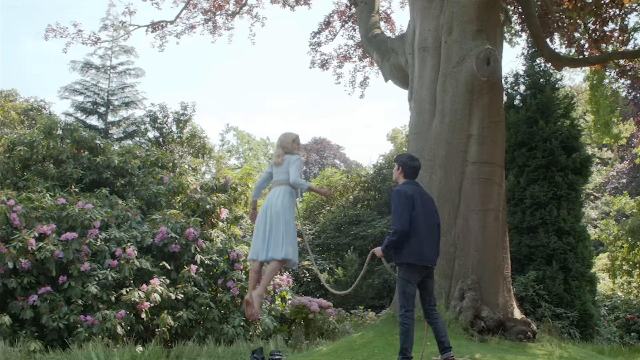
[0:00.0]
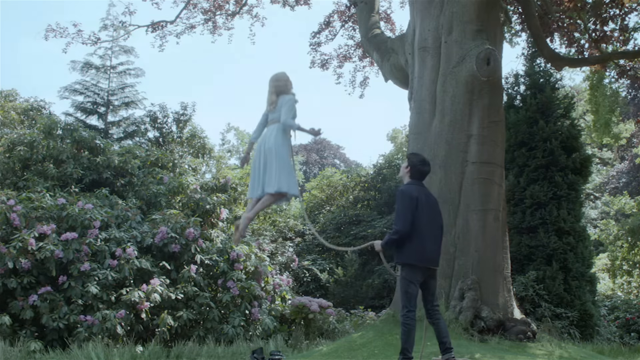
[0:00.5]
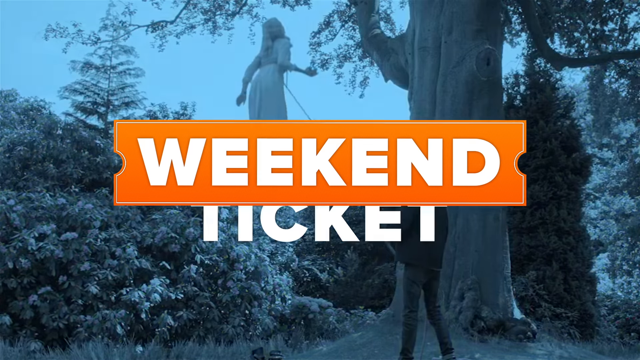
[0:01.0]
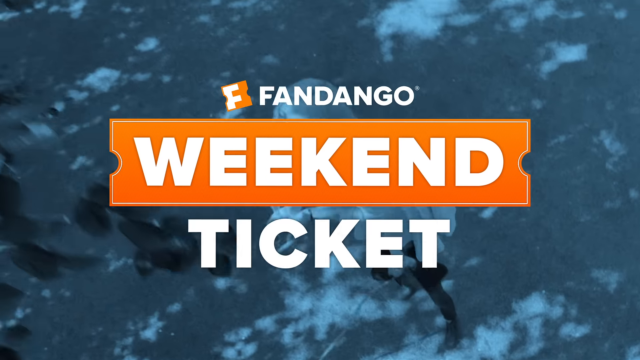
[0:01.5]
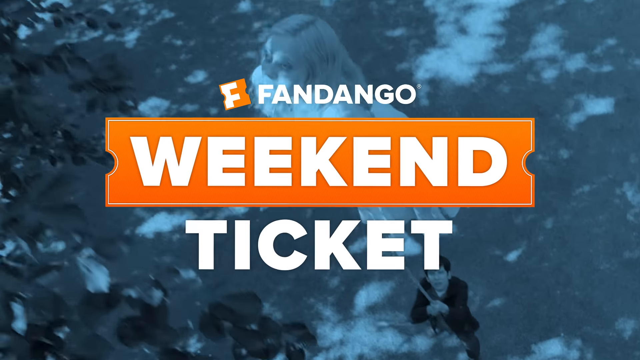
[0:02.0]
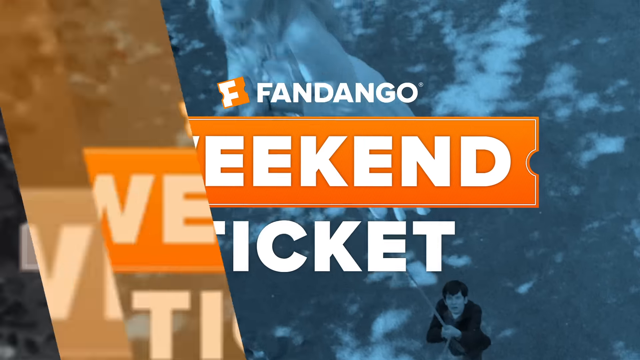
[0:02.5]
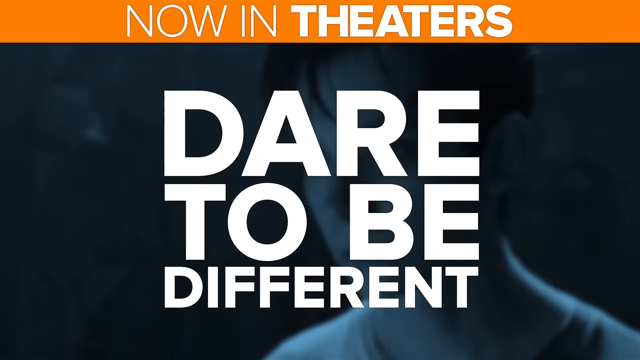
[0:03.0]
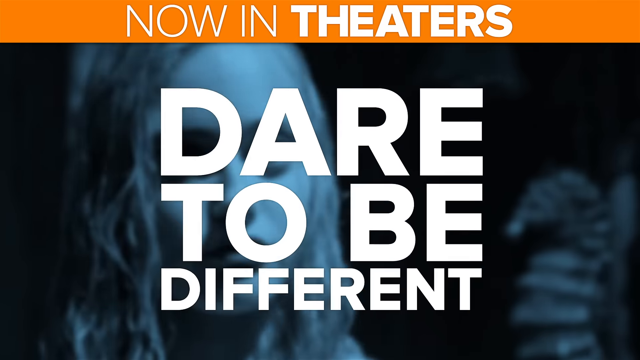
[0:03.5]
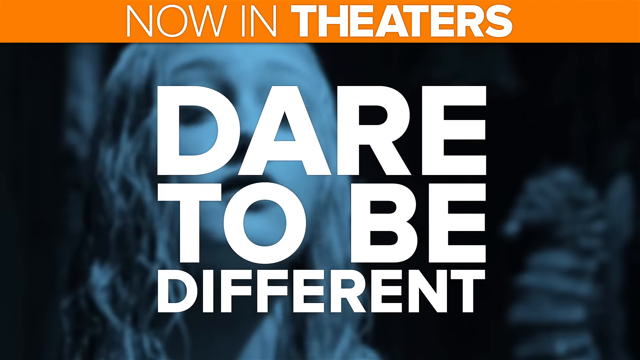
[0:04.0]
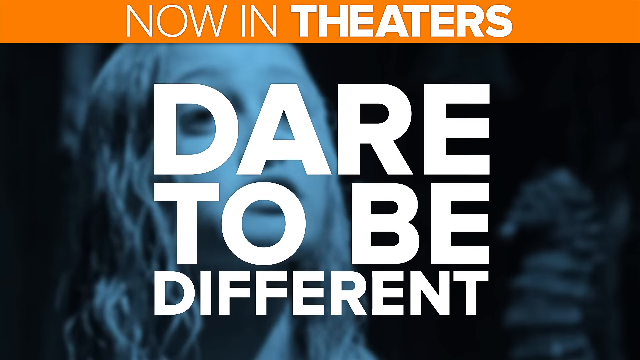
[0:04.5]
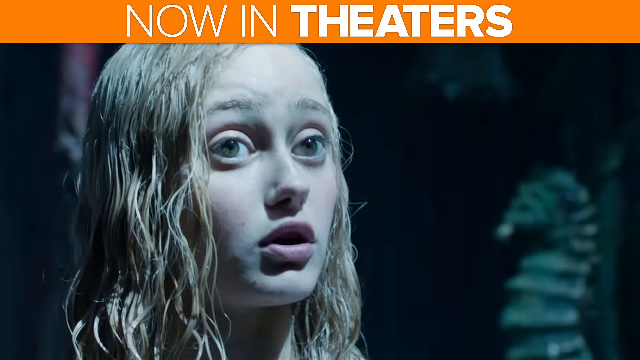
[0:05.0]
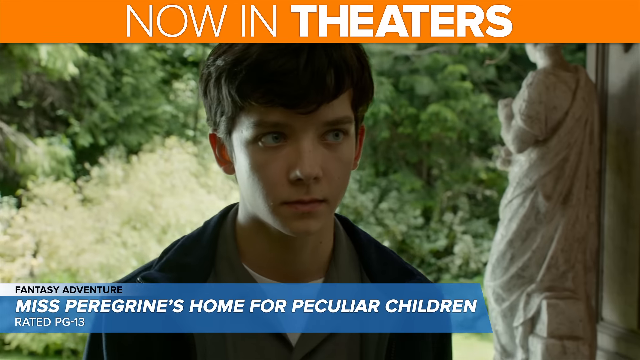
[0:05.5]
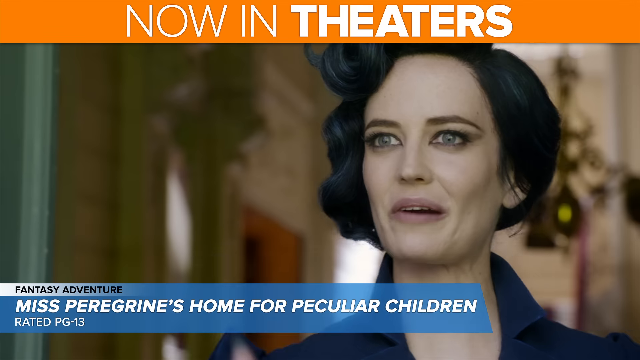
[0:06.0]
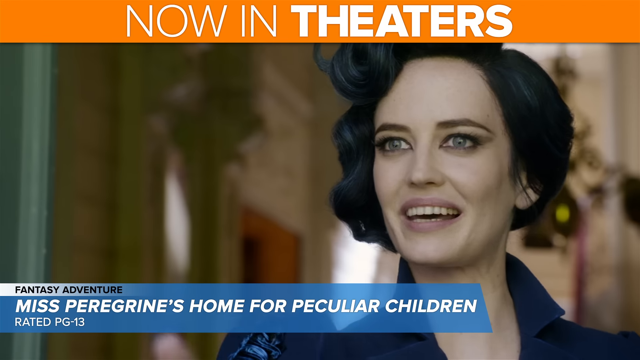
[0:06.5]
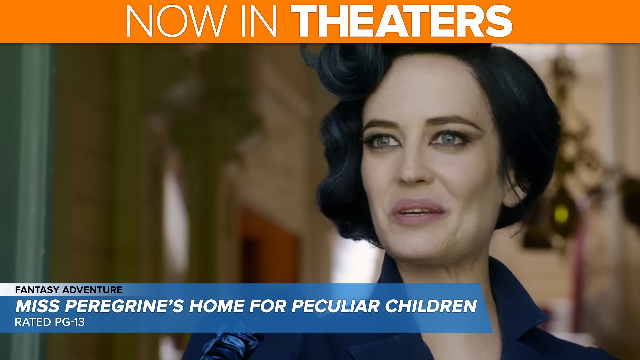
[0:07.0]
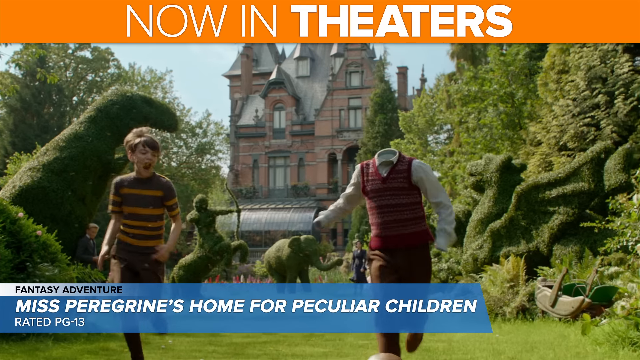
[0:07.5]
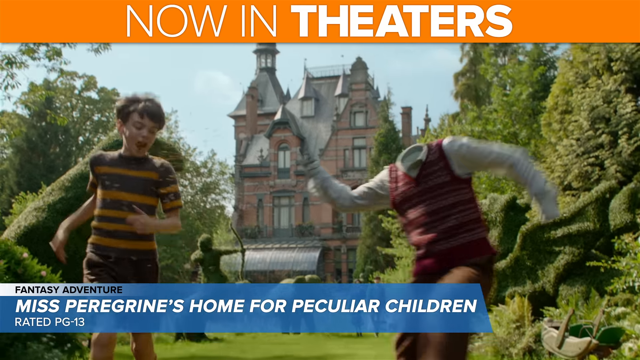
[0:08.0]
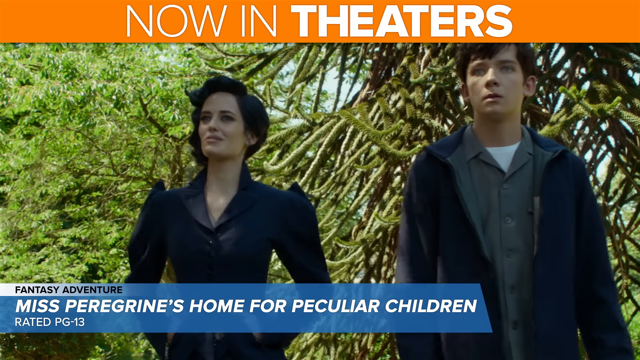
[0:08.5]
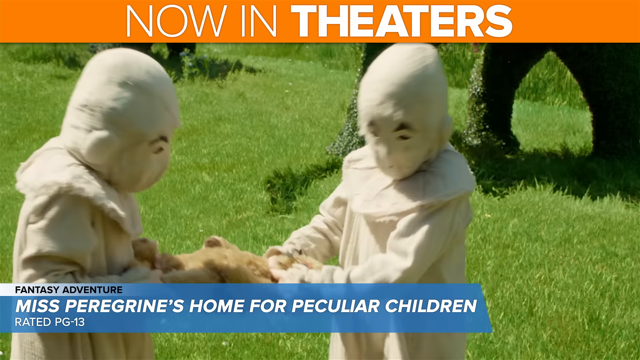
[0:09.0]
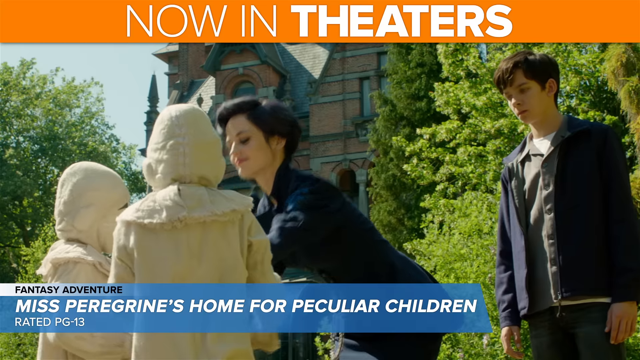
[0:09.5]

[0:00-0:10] A boy and a girl appear to be playing with a rope. A woman and a man, likely the children's father, are talking to them; the children are young and the woman and man appear to be adults. The woman seems to be trying to show them that this won't end well. The girl has a rope around her finger and the boy is playing with it, while the woman approaches them. There are apparently more than four people in the scene. The setting then shifts to a different scene with some spare shoes, and the boys are included there too. The noticeable text in that scene is "tickets," and it seems to be something playful.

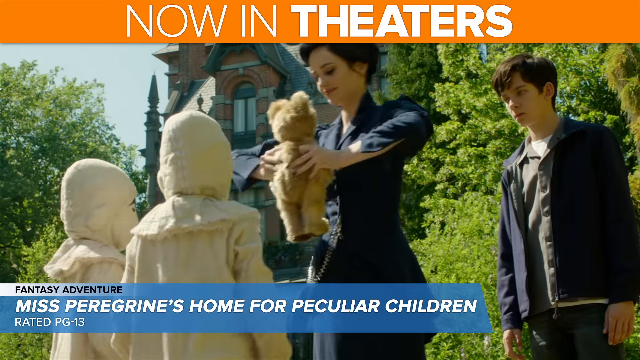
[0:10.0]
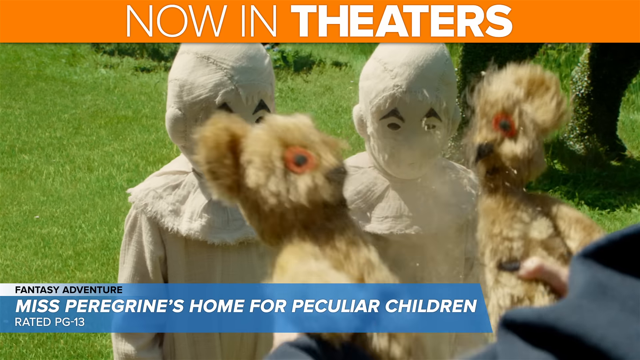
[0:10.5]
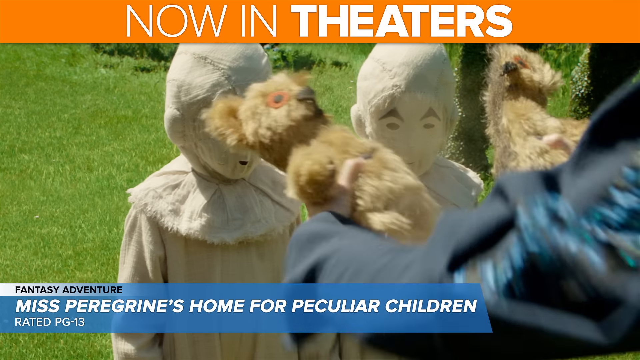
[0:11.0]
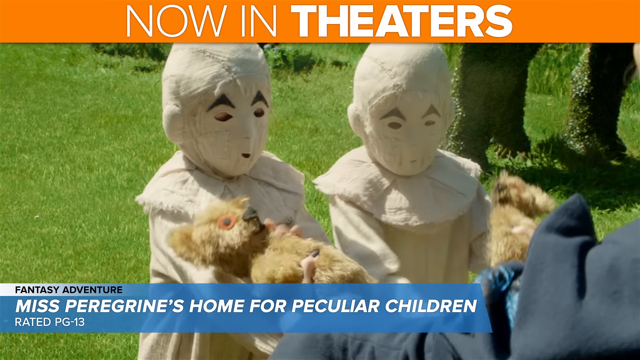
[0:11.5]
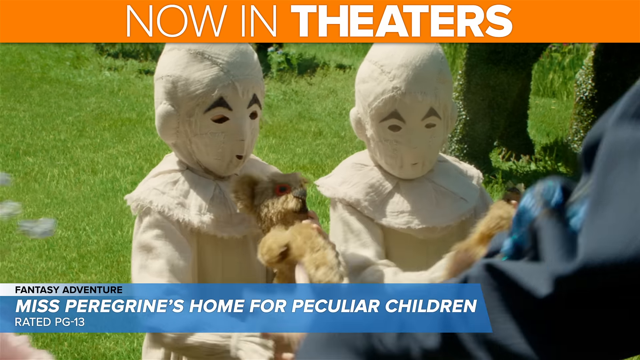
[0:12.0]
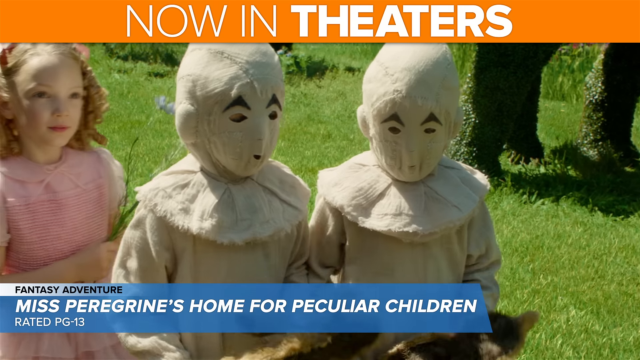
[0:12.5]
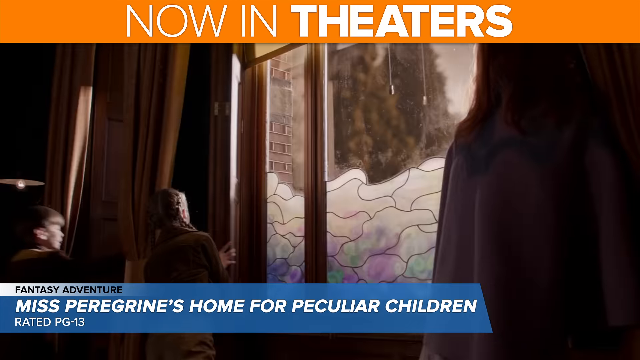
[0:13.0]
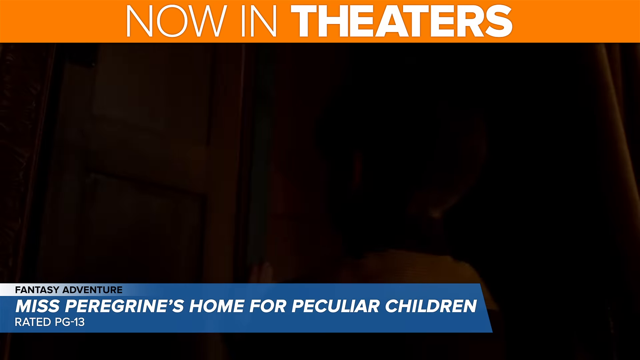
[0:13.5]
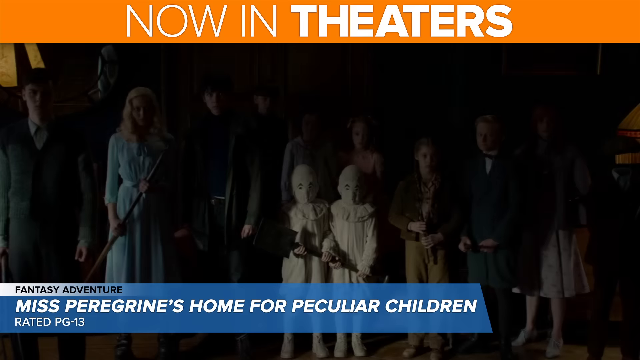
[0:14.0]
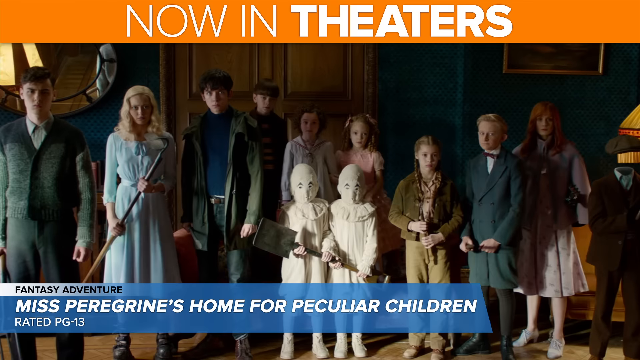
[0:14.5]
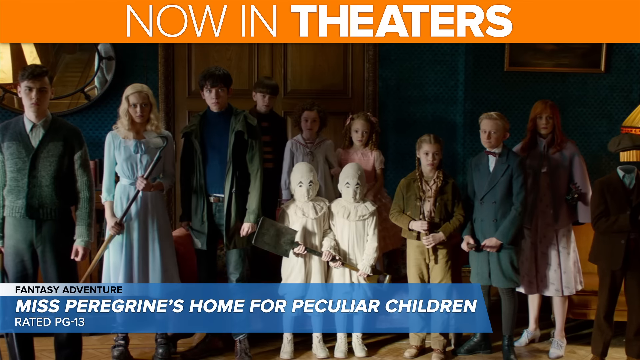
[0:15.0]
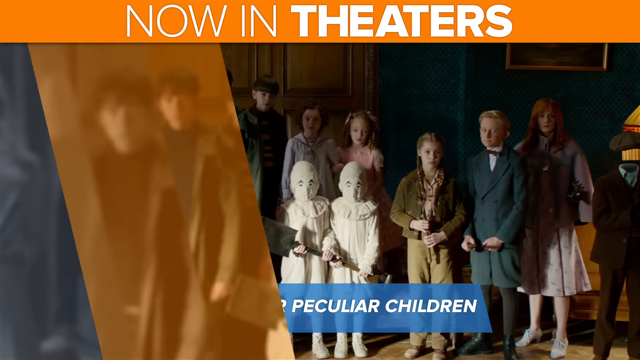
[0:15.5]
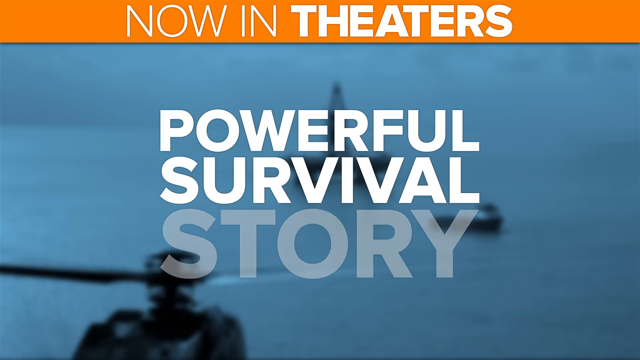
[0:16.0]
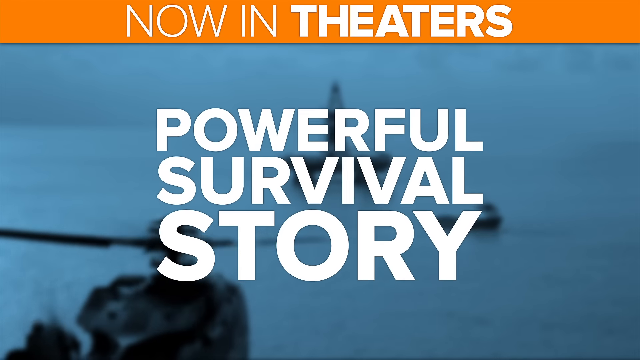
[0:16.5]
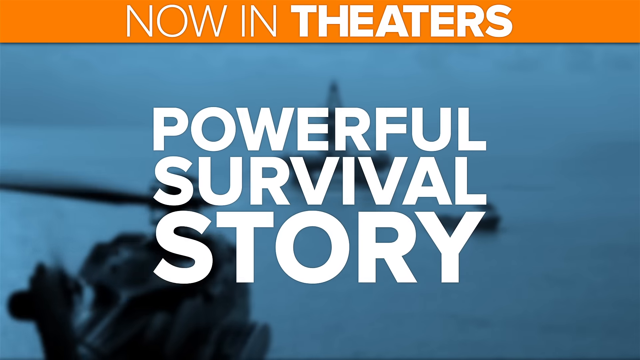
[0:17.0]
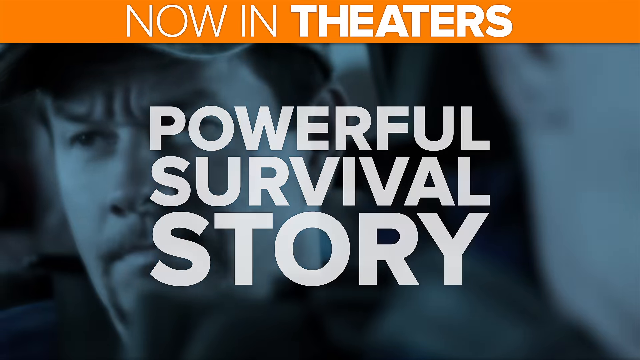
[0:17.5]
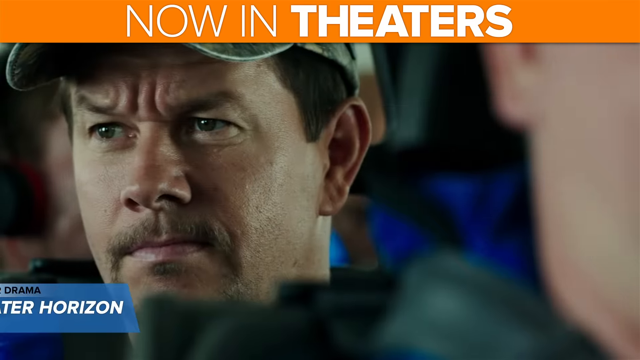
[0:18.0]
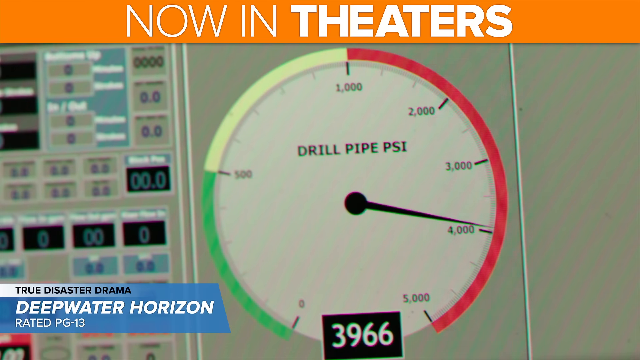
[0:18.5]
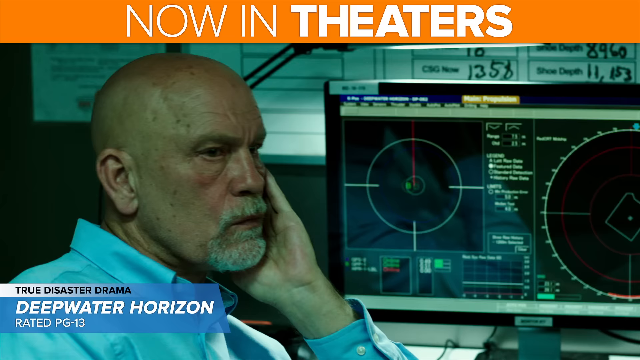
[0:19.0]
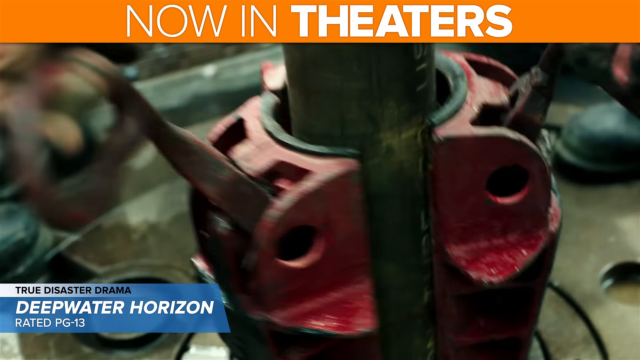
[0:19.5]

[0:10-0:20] A mother appears to be giving toys to young children, and the scene appears to take place in a home setting, apparently Miss Peregrine's home. One of the children is a young lady, possibly the daughter. There are multiple people present, though the exact number is unclear; some others look like statues and seem not to be moving. The people wear comfortable, casual clothes suitable for a home environment. The mother interacts with the children, and the children play with the toys, enjoying the moment with the mother and the father. It seems they may be on holiday or out in a public place such as a park, as there is green grass.